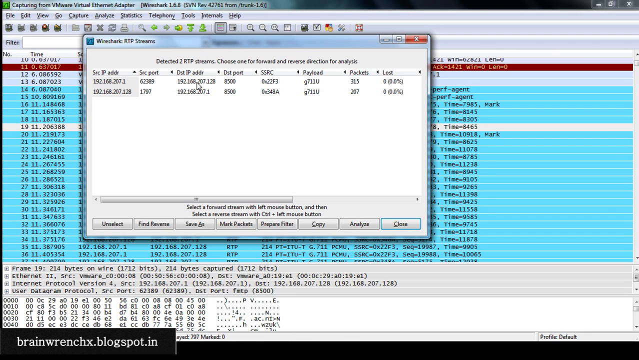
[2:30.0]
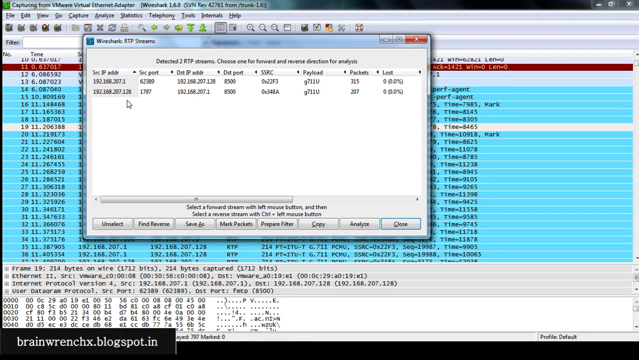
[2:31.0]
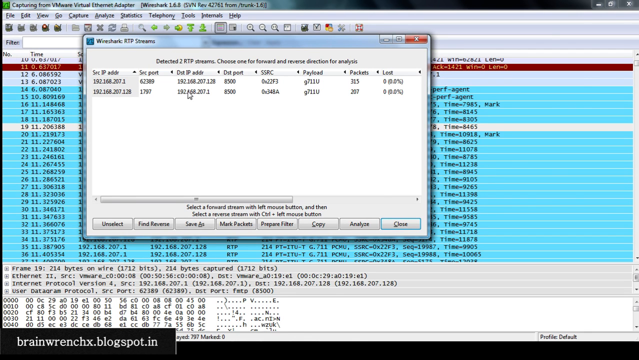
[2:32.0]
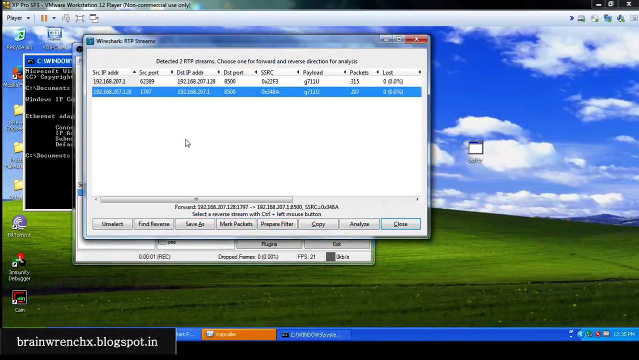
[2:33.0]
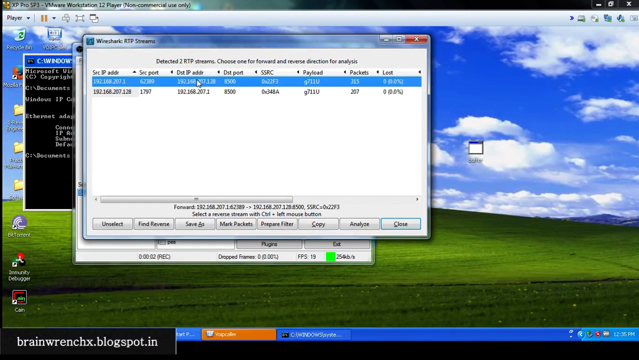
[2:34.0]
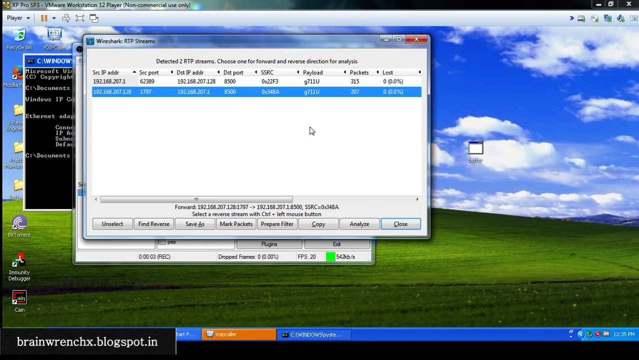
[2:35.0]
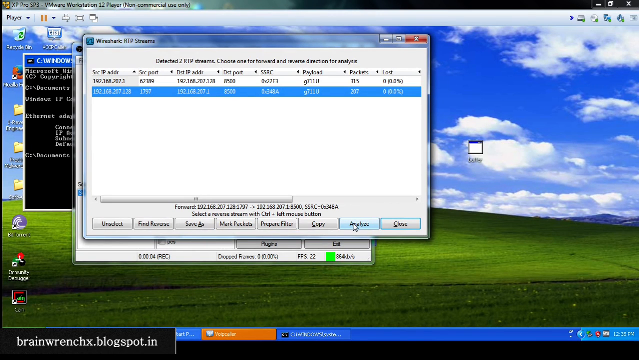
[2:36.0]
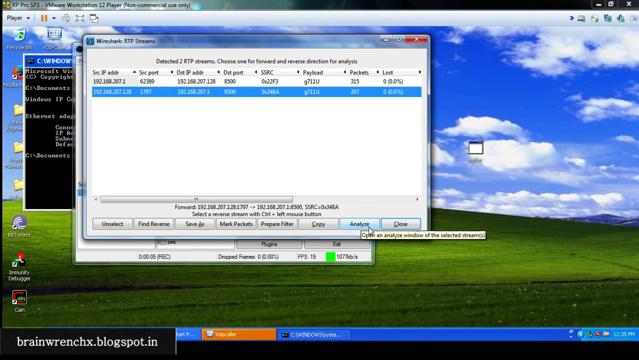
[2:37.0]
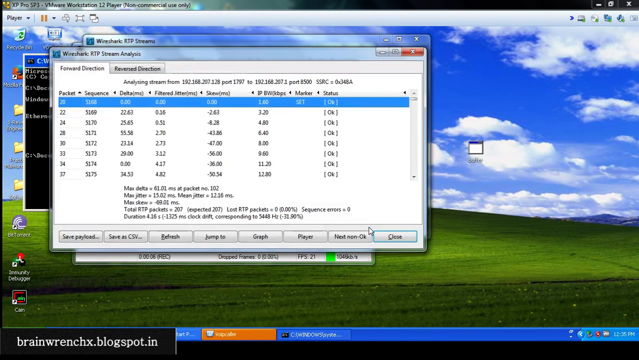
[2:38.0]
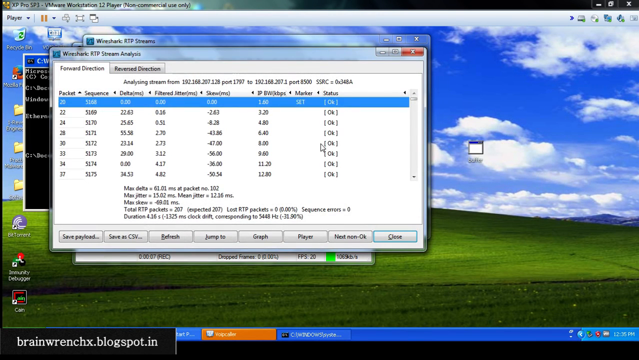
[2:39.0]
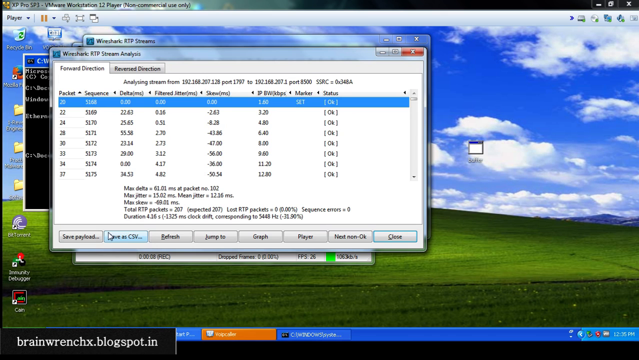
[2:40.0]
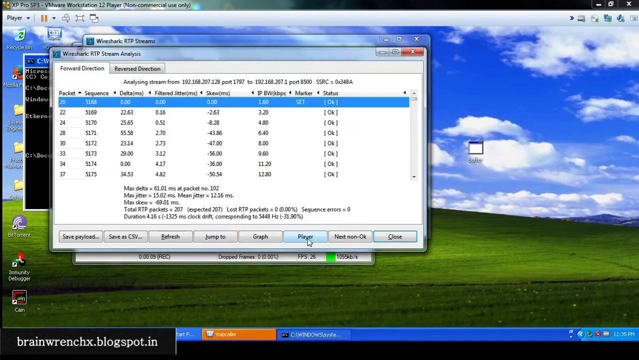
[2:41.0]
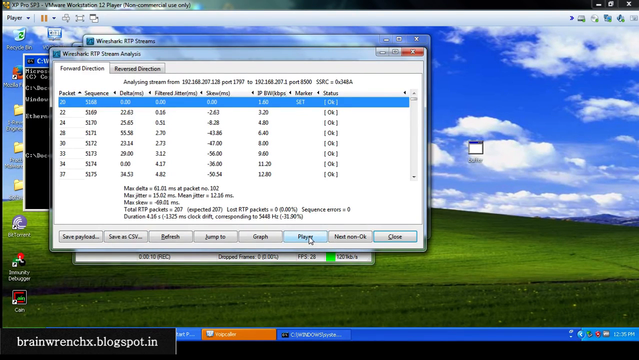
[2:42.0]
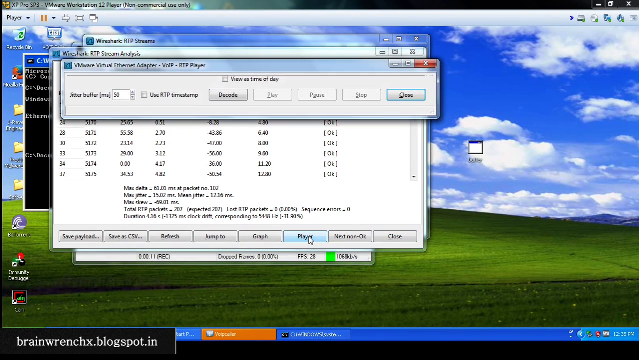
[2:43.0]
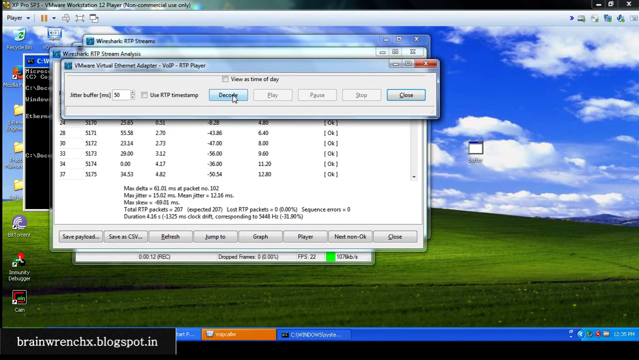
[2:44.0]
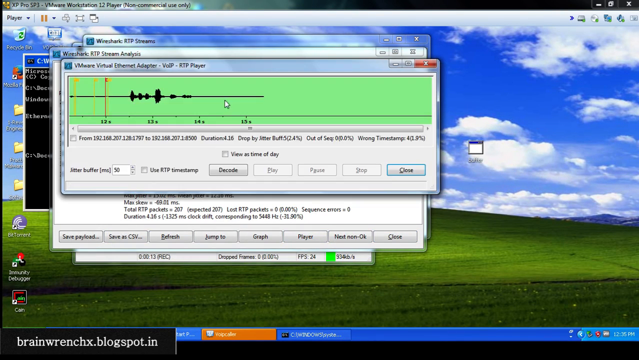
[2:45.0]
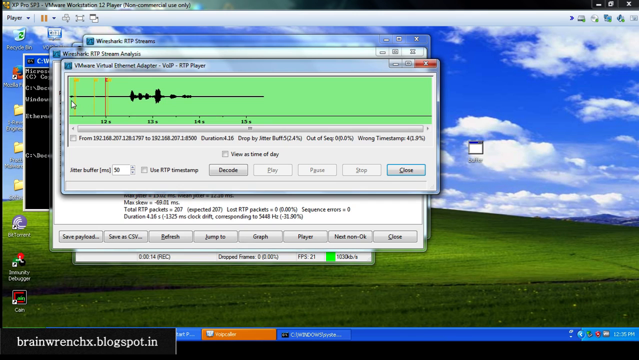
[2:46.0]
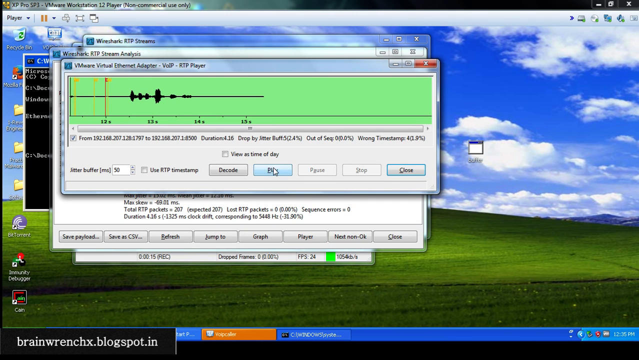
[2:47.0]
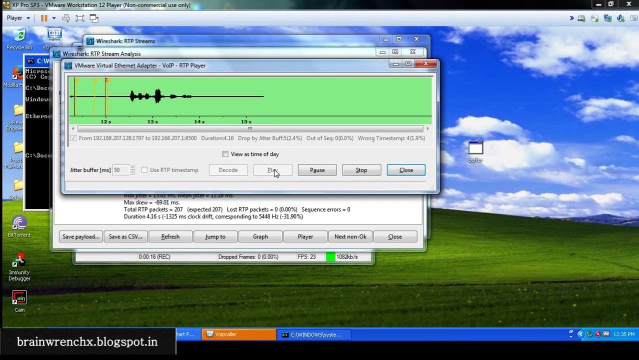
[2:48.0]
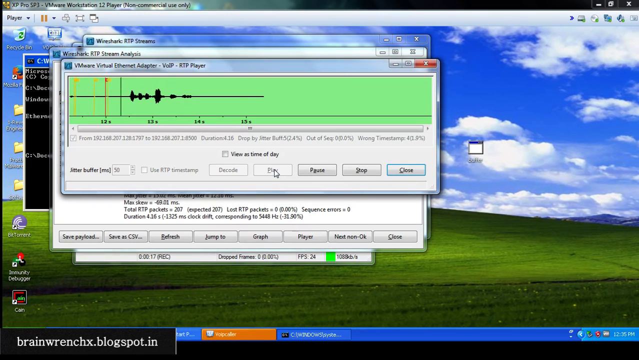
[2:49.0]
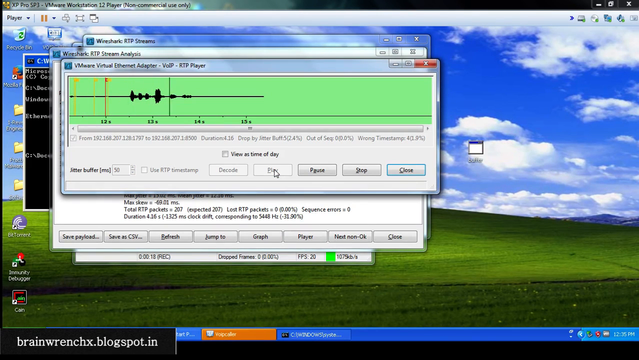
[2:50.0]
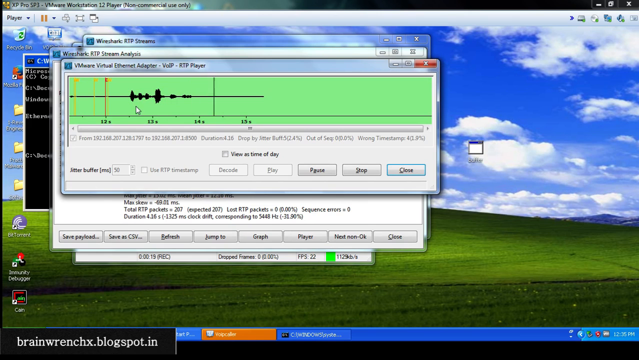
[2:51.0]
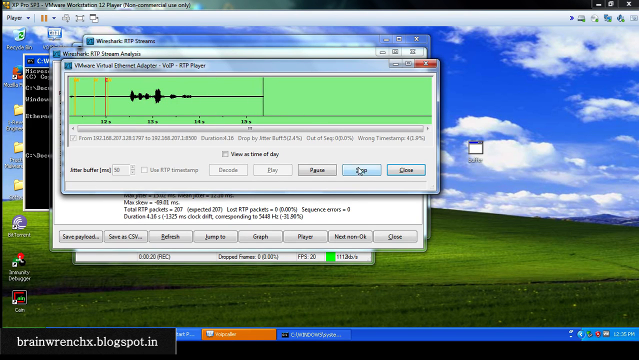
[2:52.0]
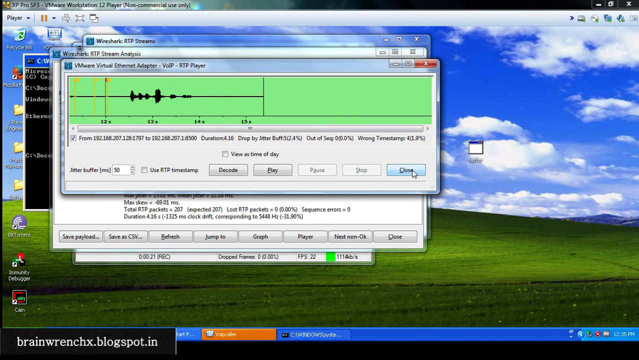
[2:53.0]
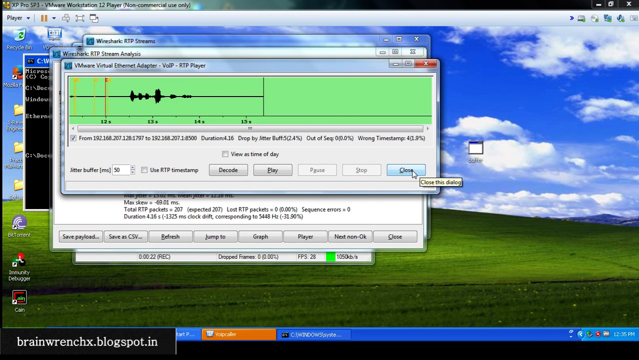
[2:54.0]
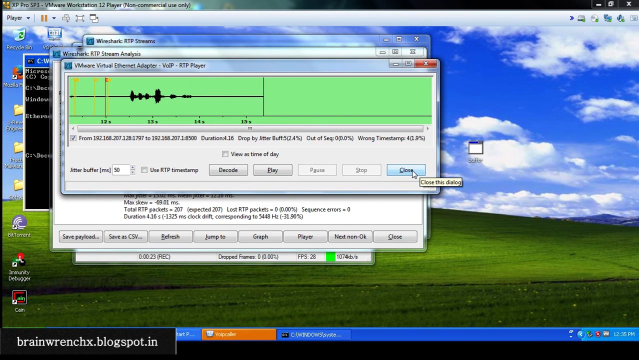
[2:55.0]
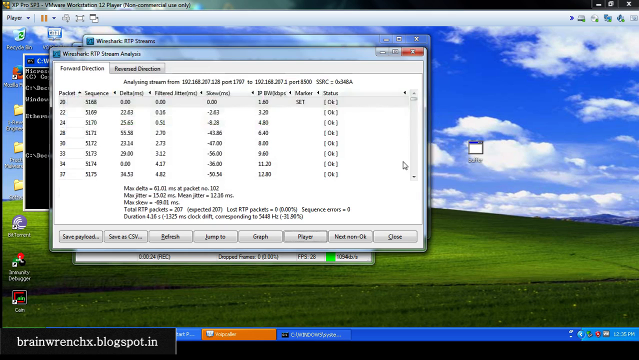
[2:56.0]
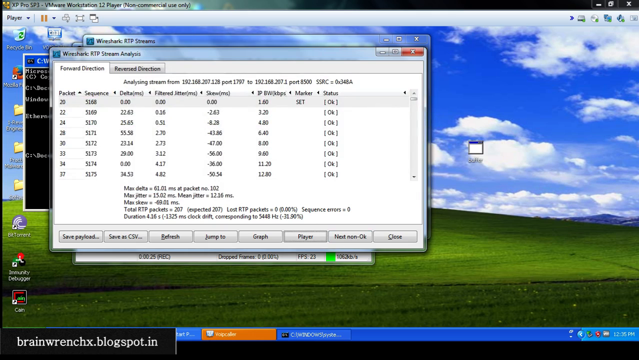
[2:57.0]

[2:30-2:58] An instructor uses Windows XP to show how to do IP config for the VoIP calling app VoIP Caller Extreme.